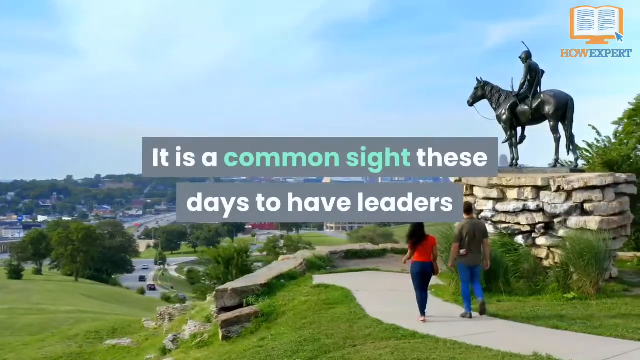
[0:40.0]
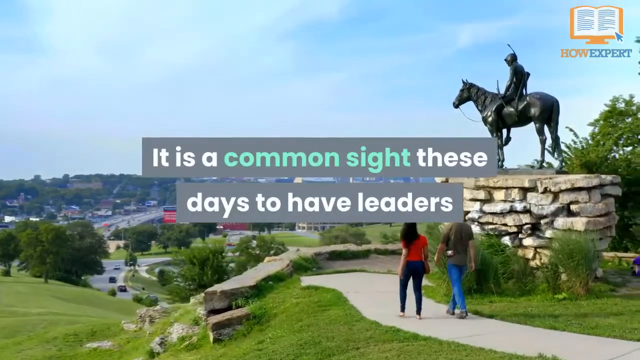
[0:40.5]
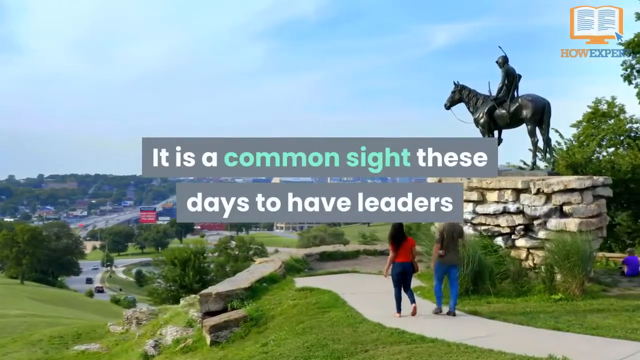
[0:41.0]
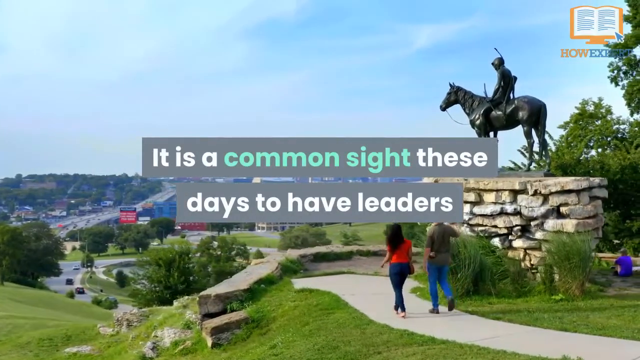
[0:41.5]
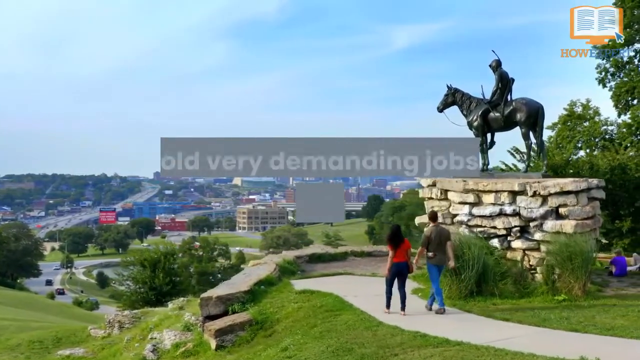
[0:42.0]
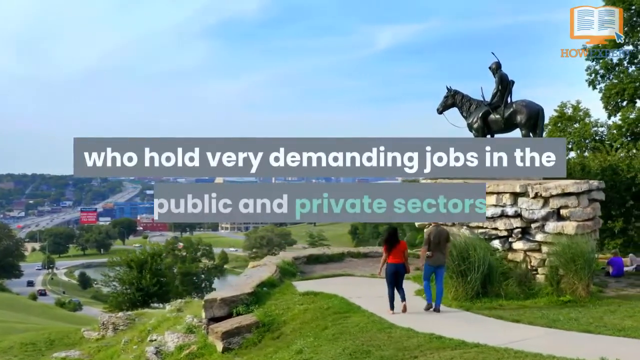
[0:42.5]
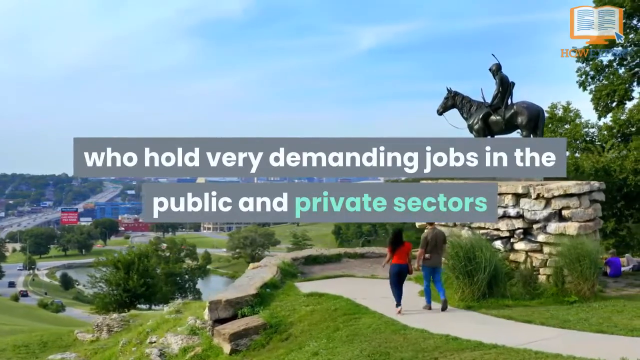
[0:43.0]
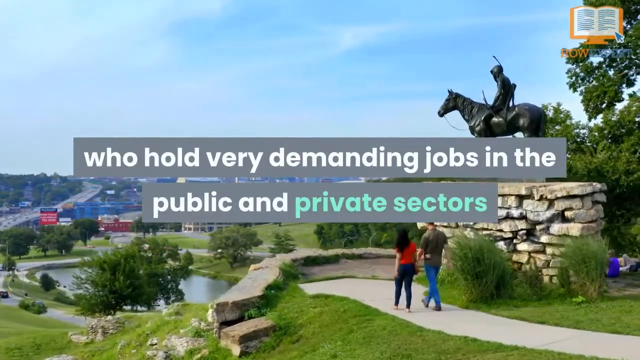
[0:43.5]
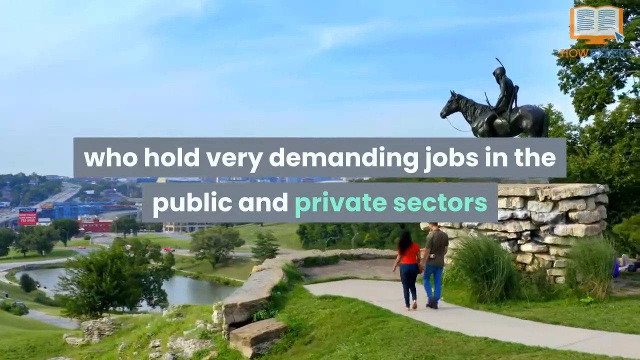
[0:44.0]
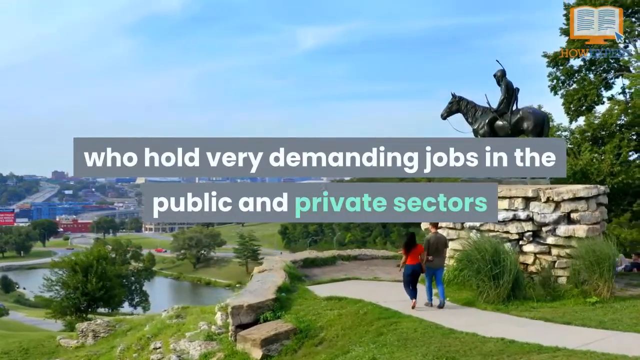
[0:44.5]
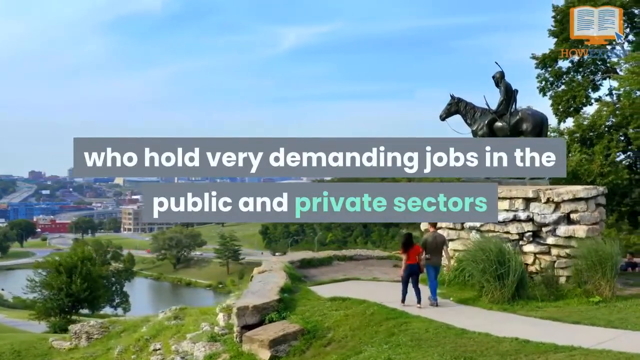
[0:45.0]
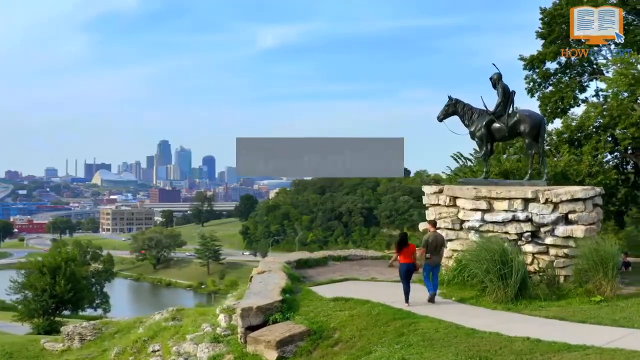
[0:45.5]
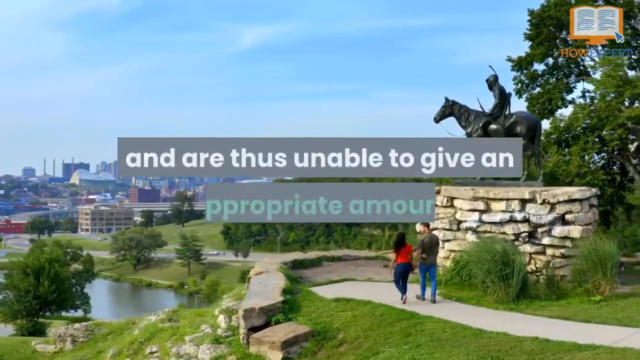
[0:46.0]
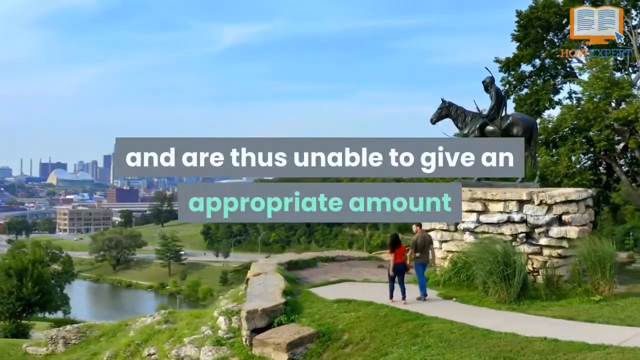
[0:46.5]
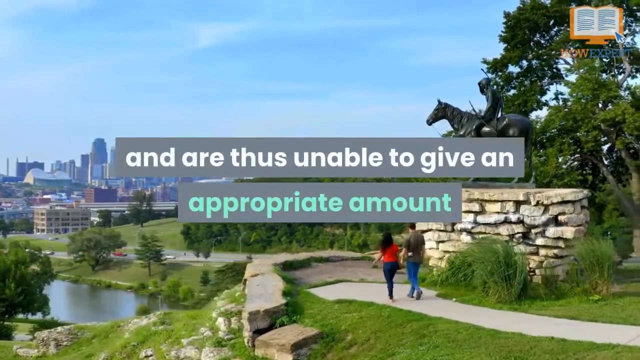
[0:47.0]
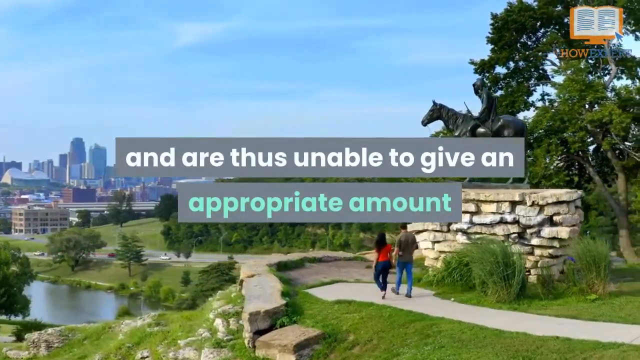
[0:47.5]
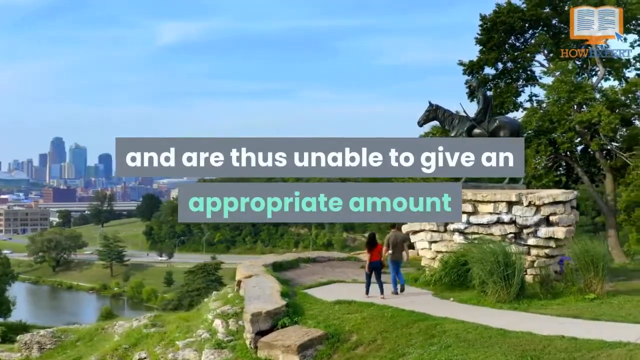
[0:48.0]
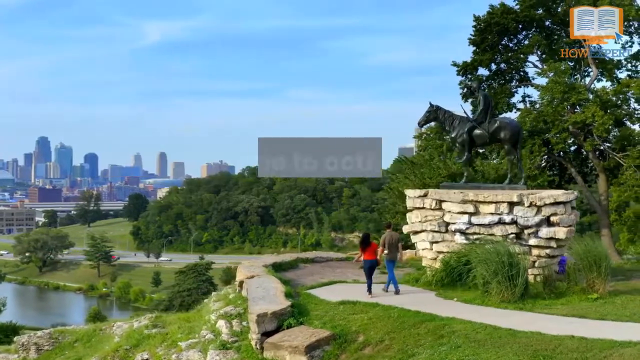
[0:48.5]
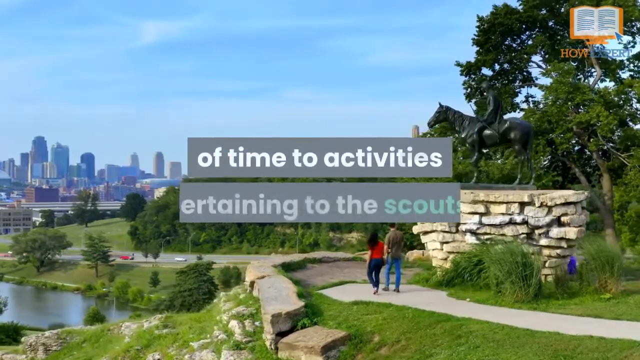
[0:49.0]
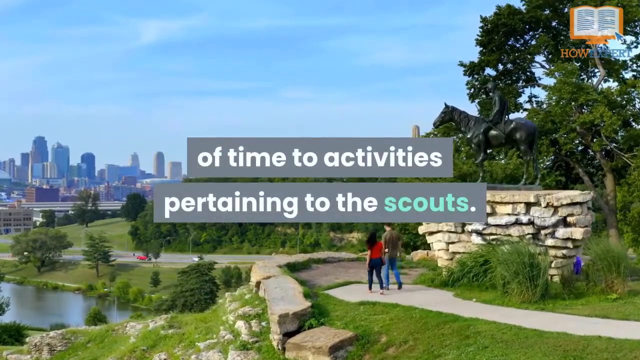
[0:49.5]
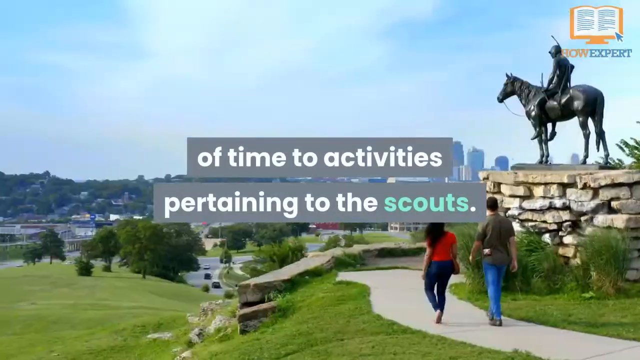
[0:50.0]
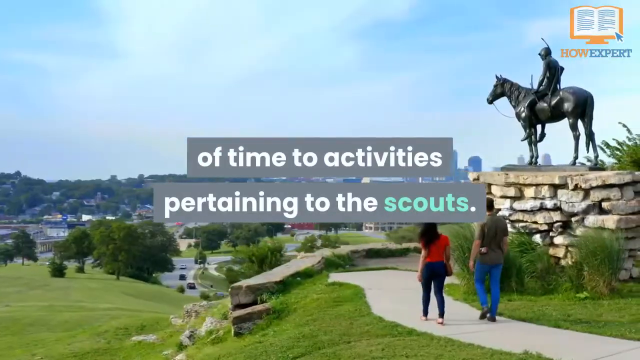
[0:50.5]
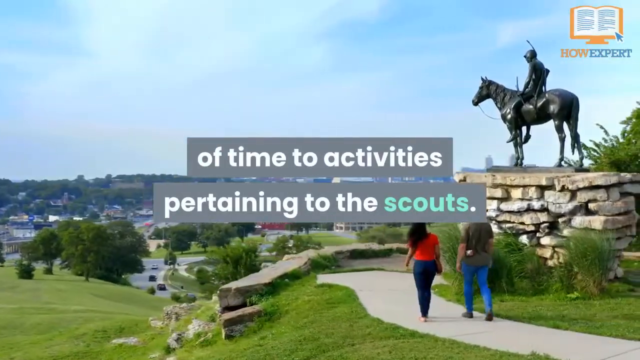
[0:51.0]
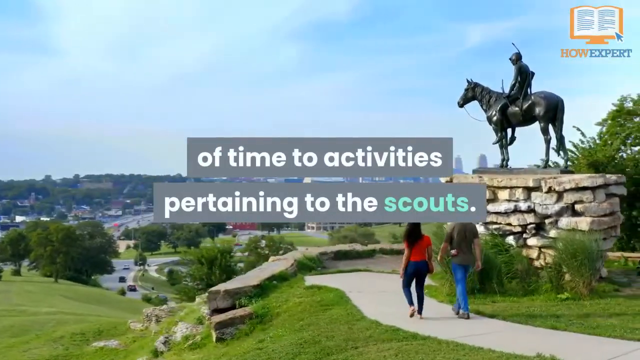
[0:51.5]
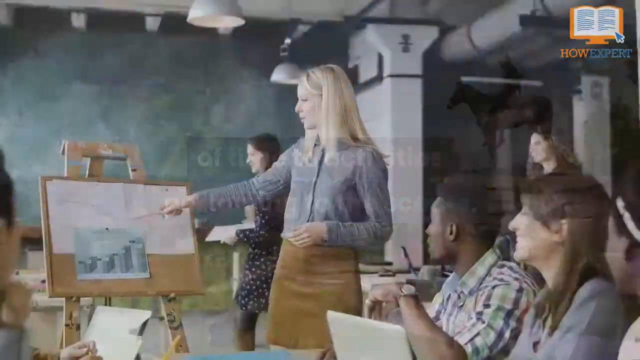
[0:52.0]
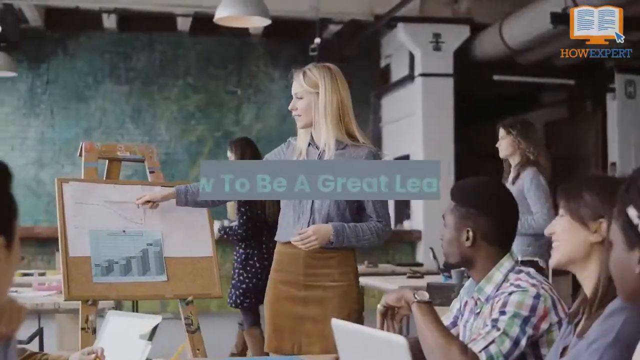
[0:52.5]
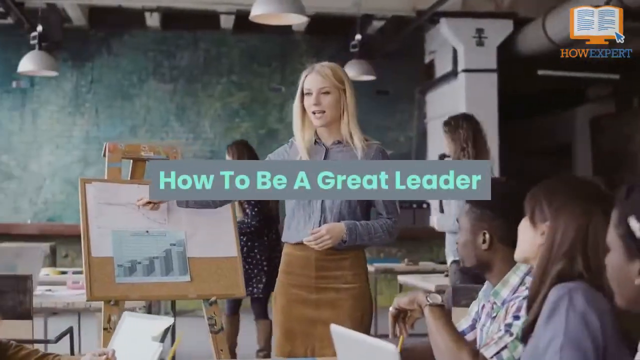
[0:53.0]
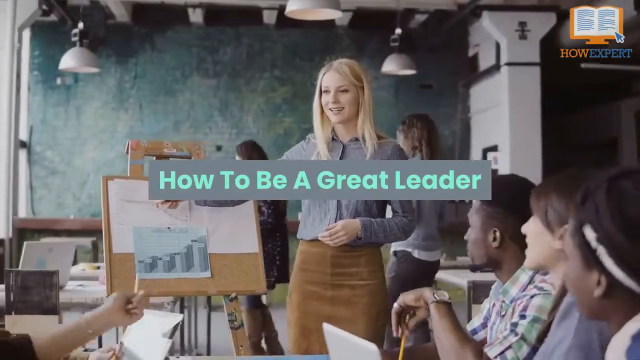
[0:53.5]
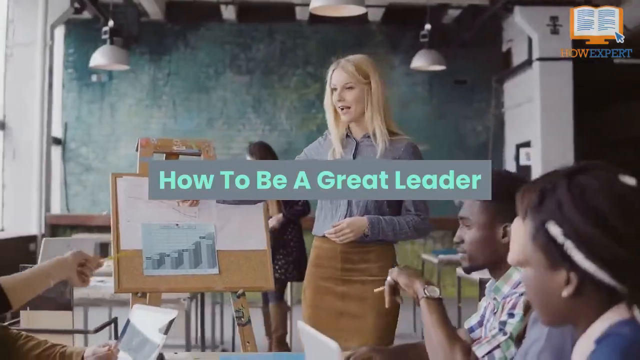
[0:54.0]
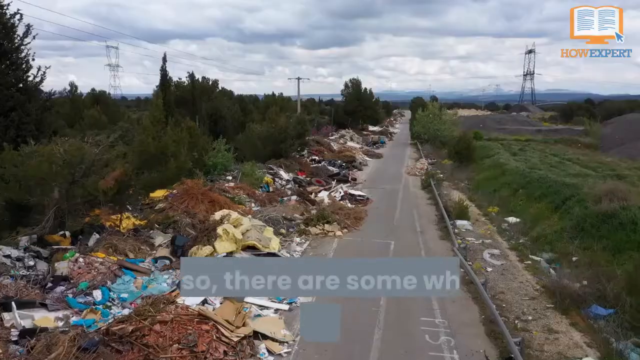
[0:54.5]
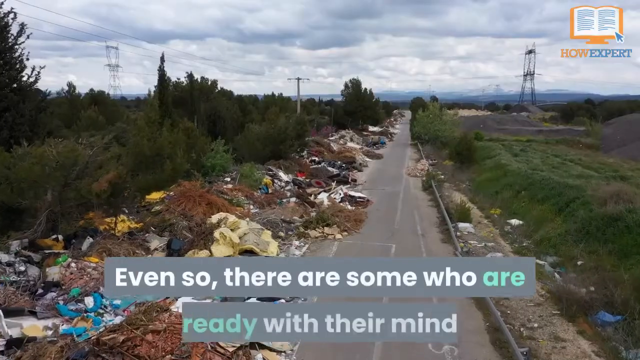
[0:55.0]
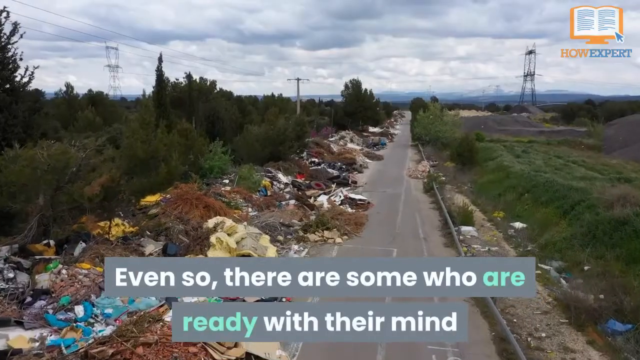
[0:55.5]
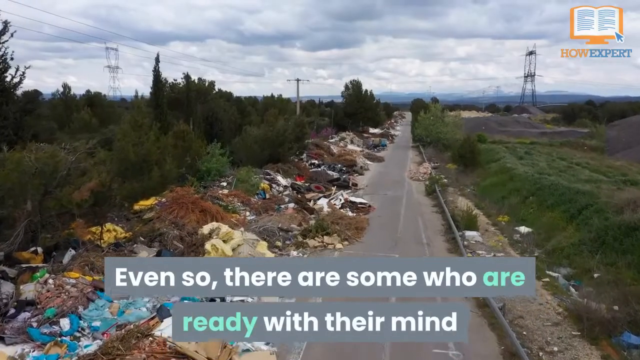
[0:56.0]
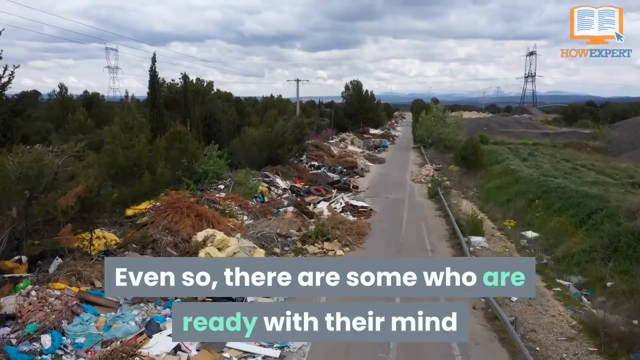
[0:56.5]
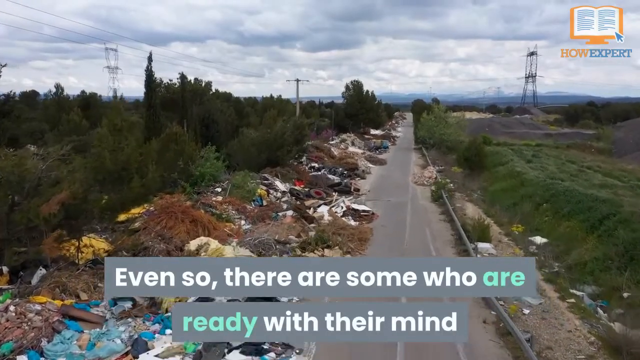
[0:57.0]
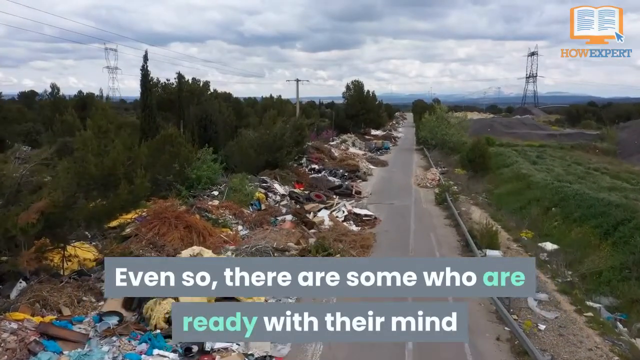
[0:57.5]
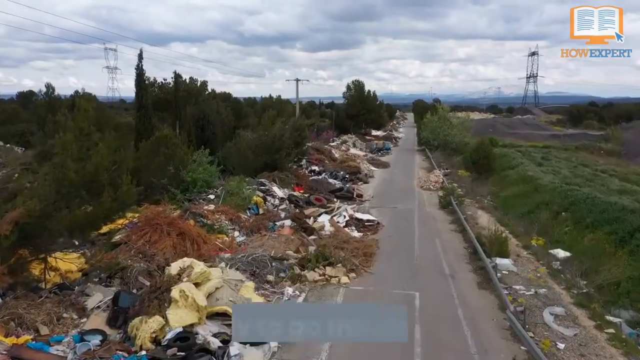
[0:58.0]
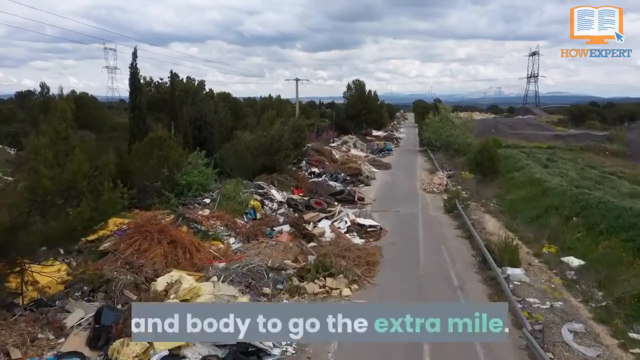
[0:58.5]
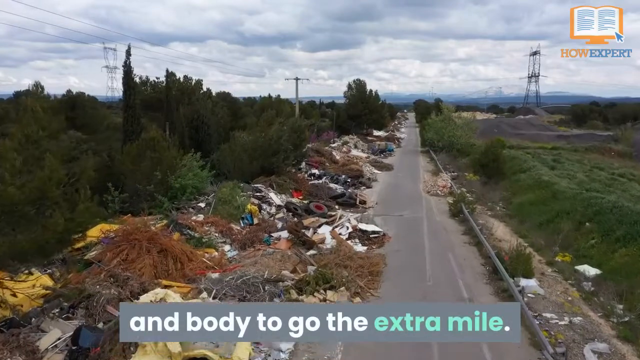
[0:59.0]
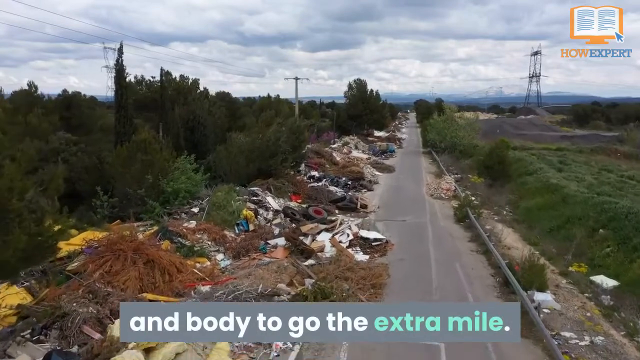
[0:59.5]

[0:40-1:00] The horse statue on the rocks overlooking the city appears, with kind of a walkway on it, and the view kind of scrolls around as text reads "it is a common sight these days to have leaders who hold very demanding jobs in the public and private sectors and are thus unable to give an appropriate amount of time to activities pertaining to the scouts." Then comes a classroom shot of some sort, apparently with older adults, maybe at a college. A blonde woman in a brown skirt and a kind of grayish shirt is at something like a bulletin board or easel with a document, along with some other people; it looks like they are doing a presentation. "how to be a great leader" pops up on the screen. Next is a shot of something like a highway with lots of garbage, or the aftermath of something, with the text "even so there are some who are ready with their mind and body to go the extra mile." The sequence ends with a shot of somebody, possibly an athlete, at what kind of looks like an archway to an arena or a concert hall; it is unclear because the shot fades out quickly.